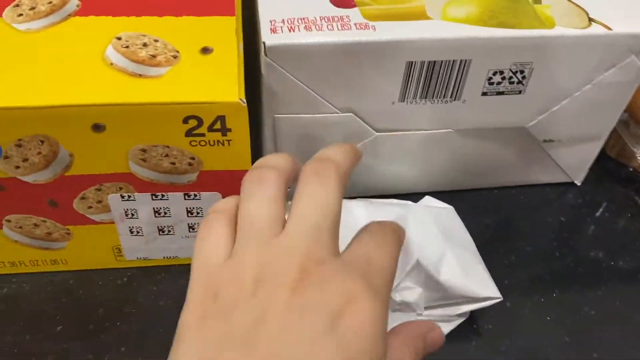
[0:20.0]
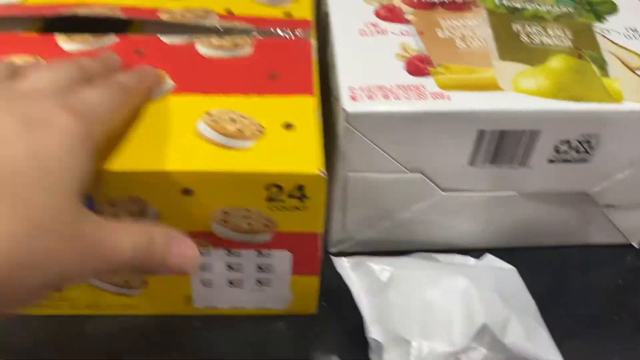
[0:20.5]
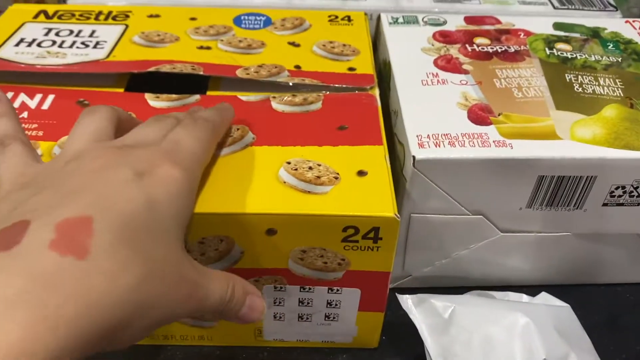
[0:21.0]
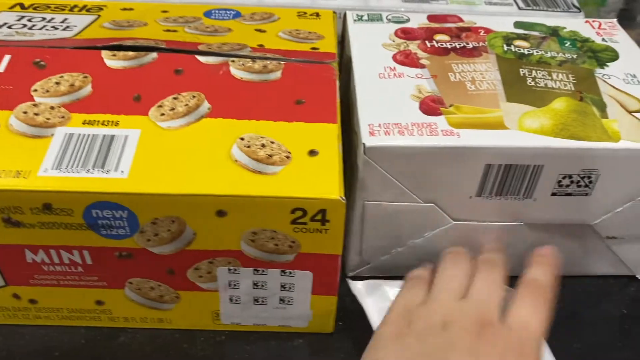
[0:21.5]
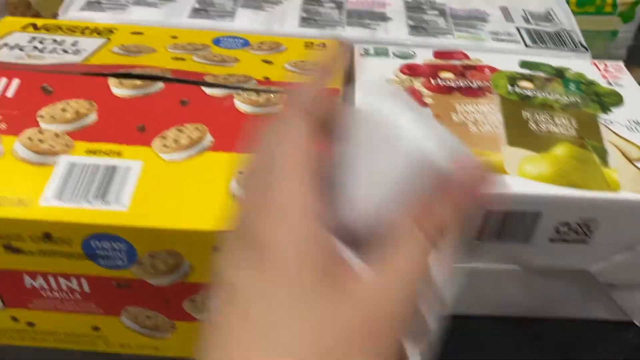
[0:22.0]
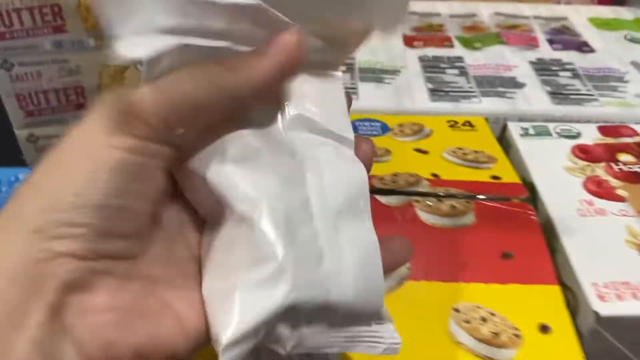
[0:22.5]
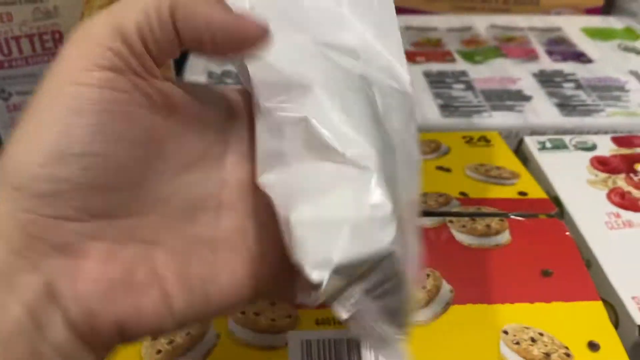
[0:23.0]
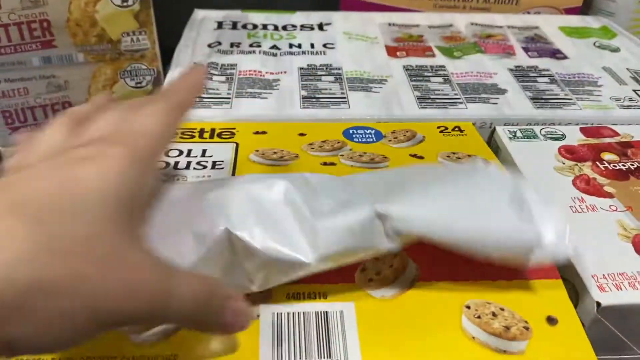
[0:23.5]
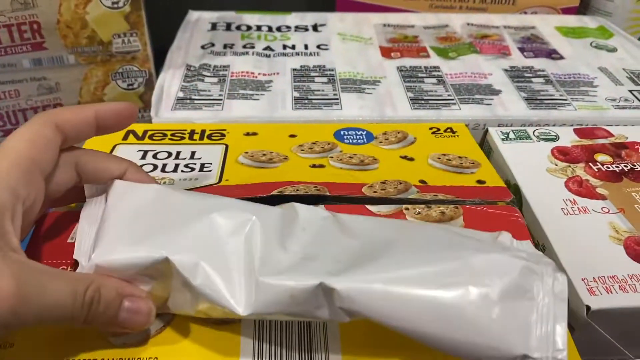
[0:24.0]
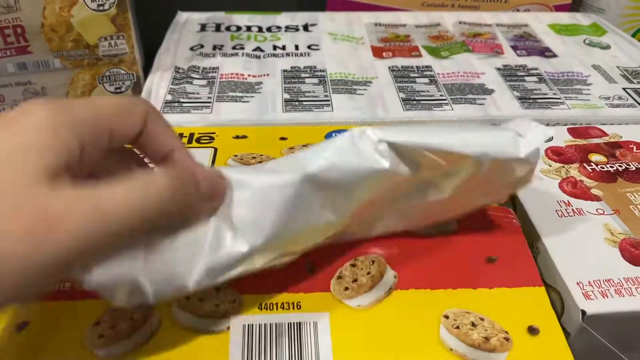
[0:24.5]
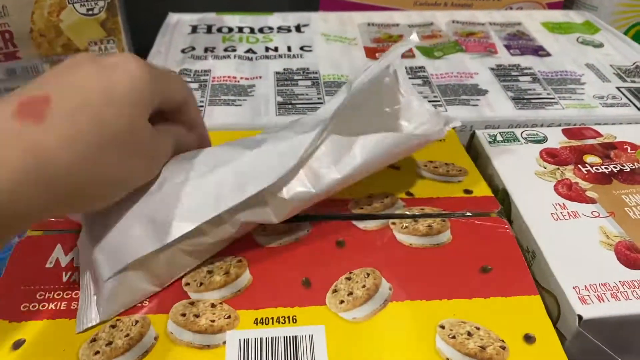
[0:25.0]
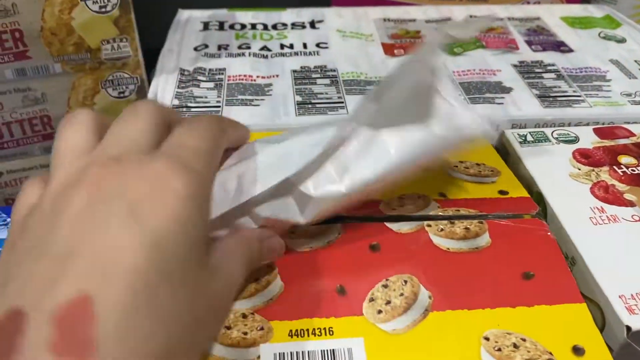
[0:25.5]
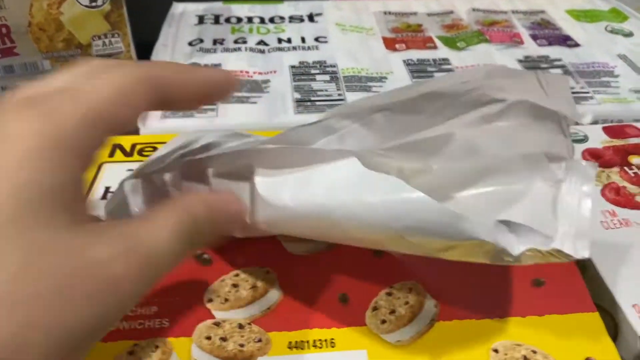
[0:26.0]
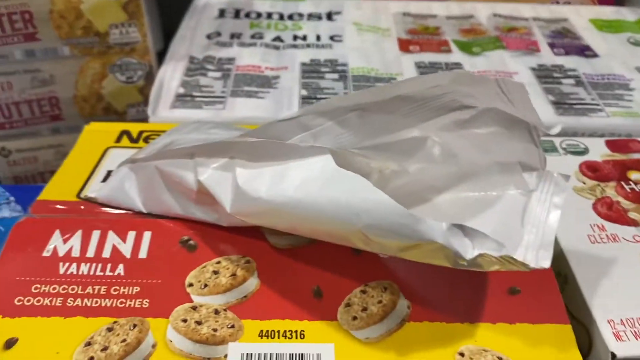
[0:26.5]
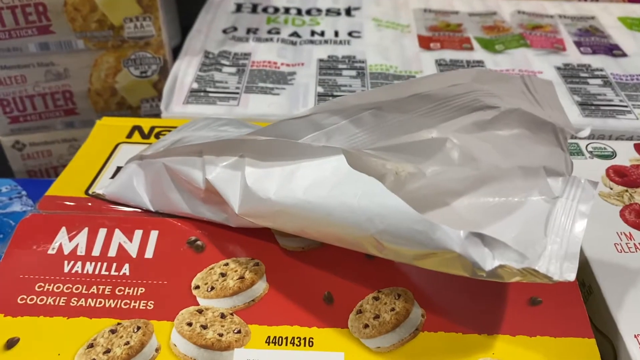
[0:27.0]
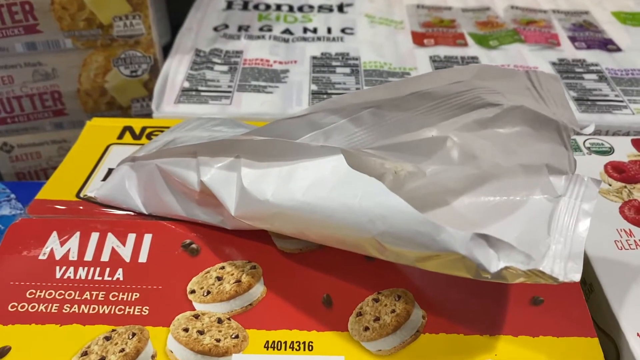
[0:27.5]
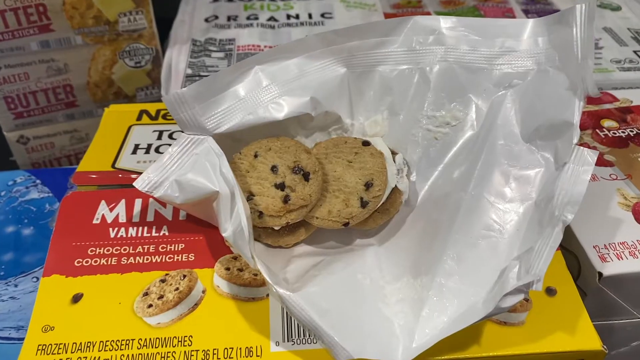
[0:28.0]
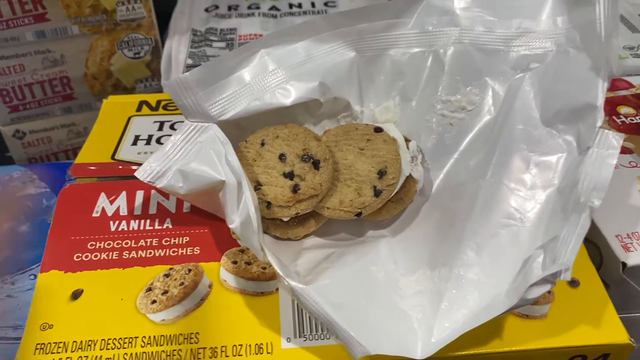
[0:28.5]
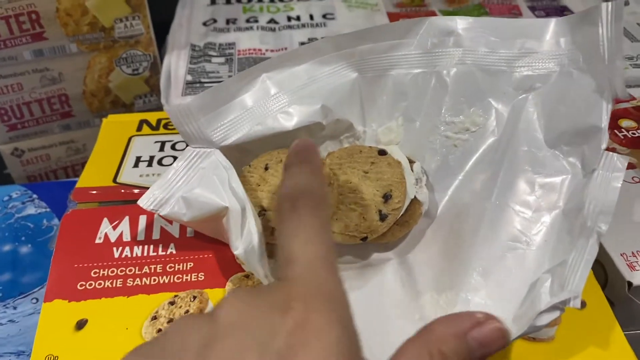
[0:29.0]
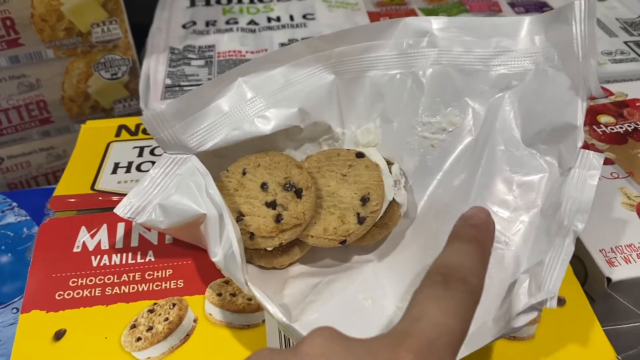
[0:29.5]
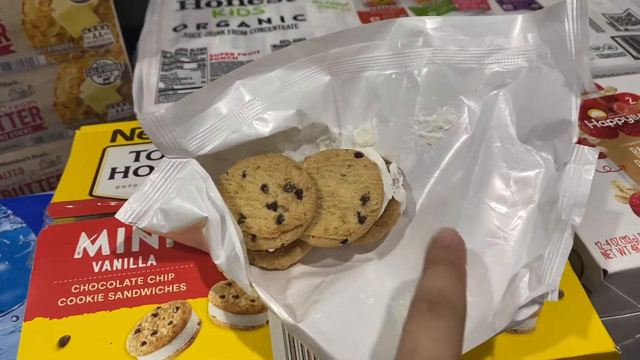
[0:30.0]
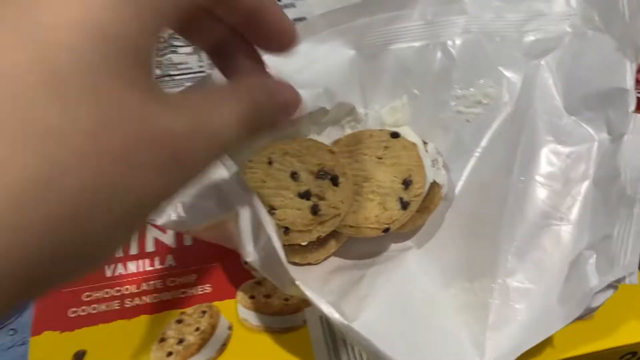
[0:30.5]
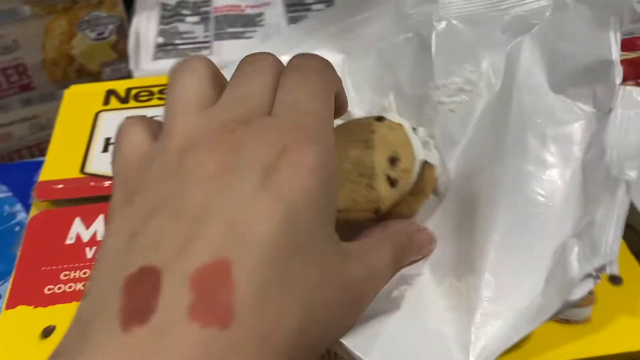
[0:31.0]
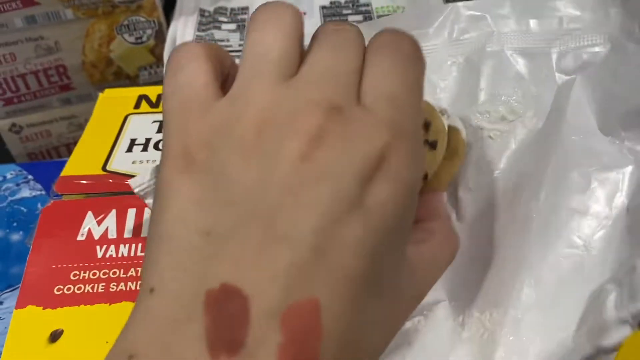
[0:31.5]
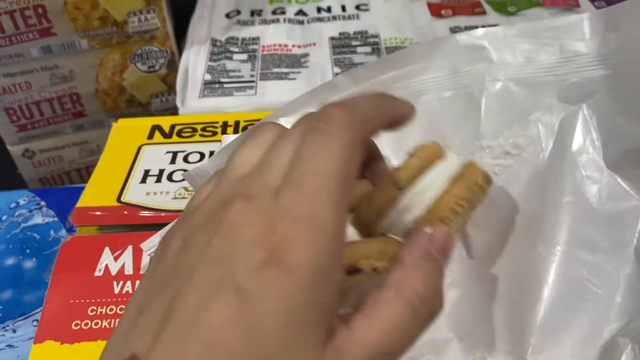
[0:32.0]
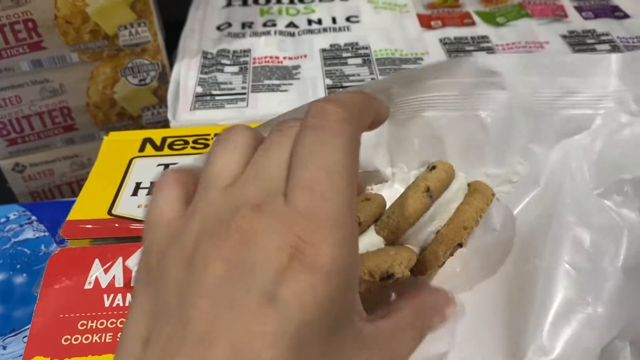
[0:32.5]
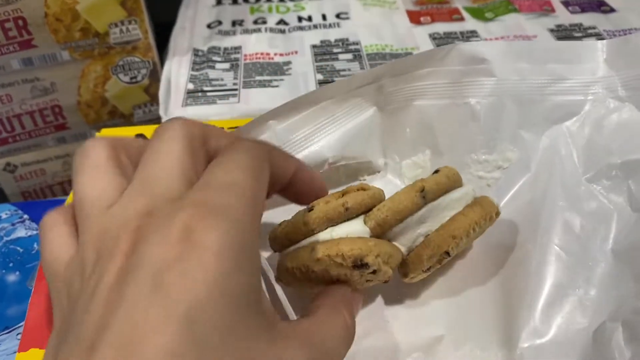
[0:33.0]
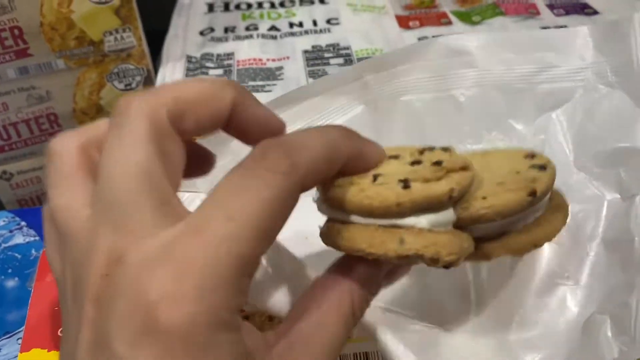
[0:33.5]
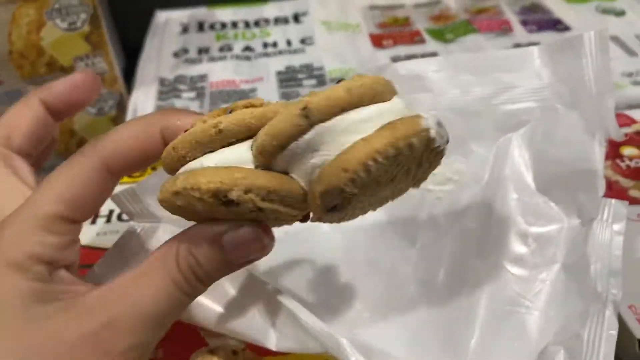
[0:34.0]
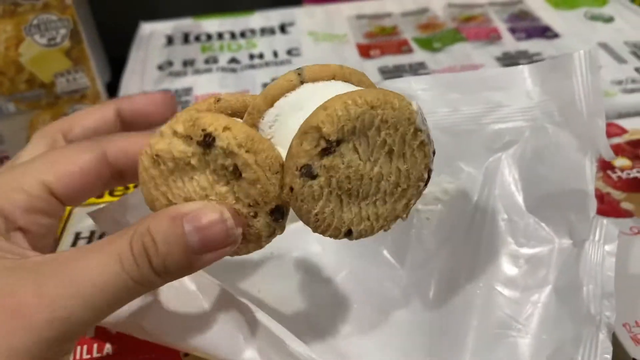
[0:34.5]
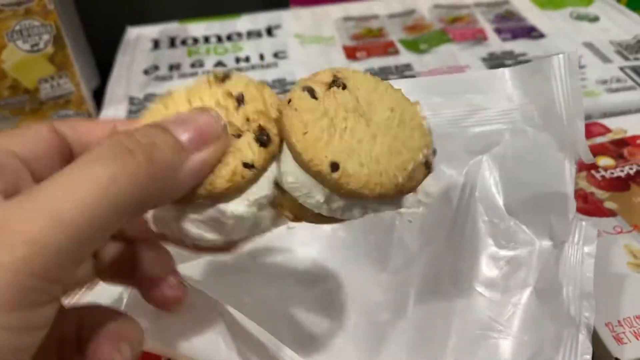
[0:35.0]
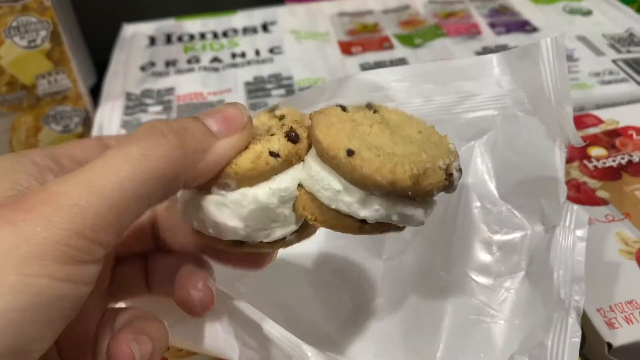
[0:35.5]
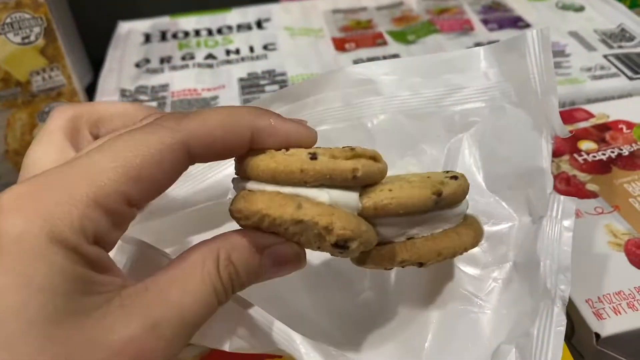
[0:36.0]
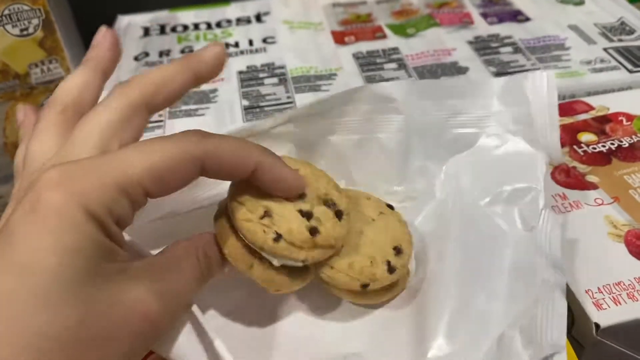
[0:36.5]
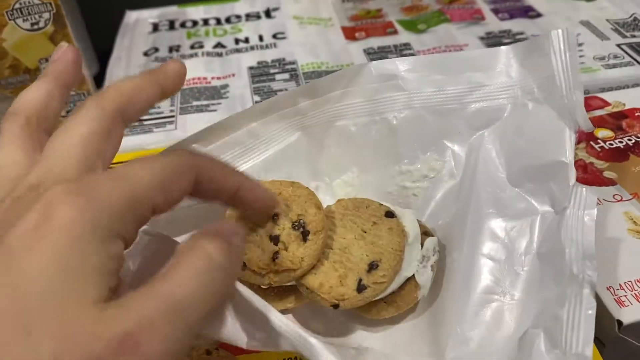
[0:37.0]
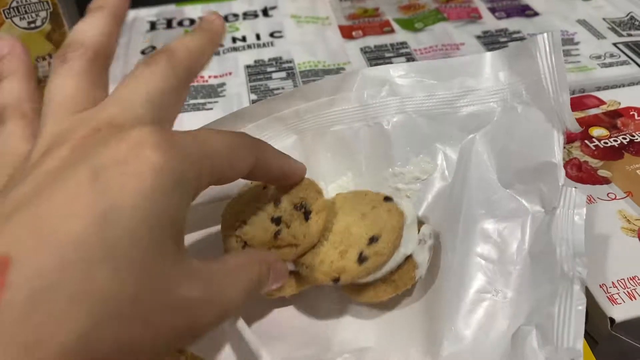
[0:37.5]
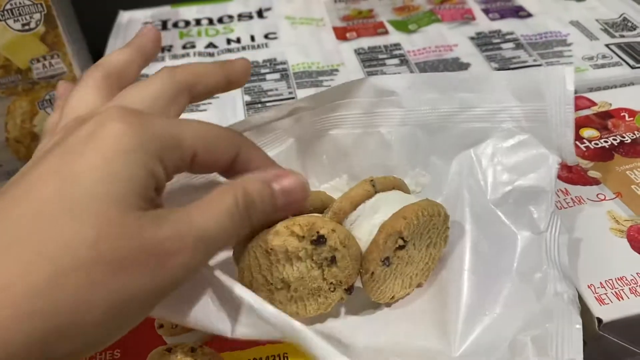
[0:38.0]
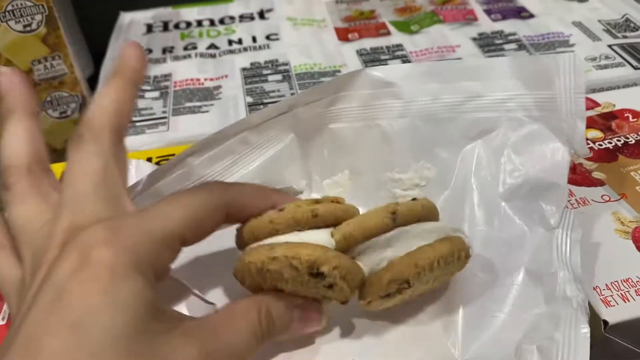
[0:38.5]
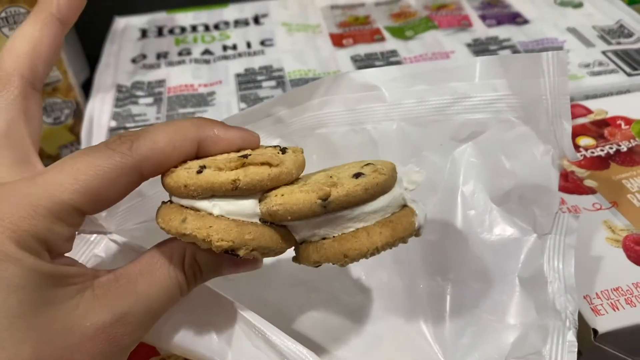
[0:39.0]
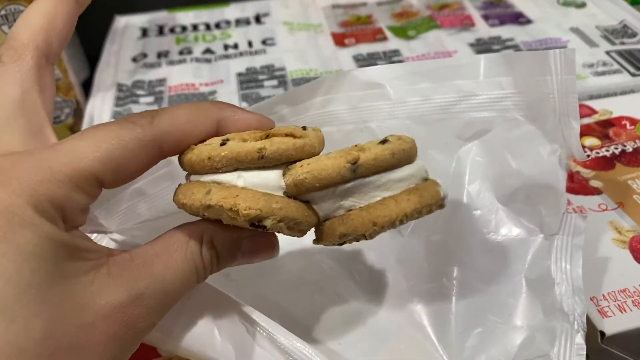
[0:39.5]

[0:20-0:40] A close-up shows a left hand touching the top portion of the Toll House box, resting on the left flat section of the box. The hand moves from left to right, where there is another white box and a plastic wrapper with some items in it, which appear to be the cookie ice cream sandwiches. The left hand takes the plastic package and places it on top of one of the lid flaps of the Toll House box, then uses the ring finger and thumb to sort of reposition it. The hand flips the package over and rolls it over, and it appears to have been opened. The hand is removed, leaving the package on top of the Toll House box. The camera cuts, and when the scene reappears the package is opened even wider, with two cookies inside.